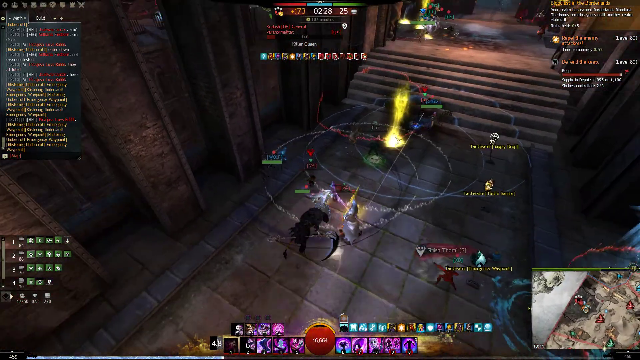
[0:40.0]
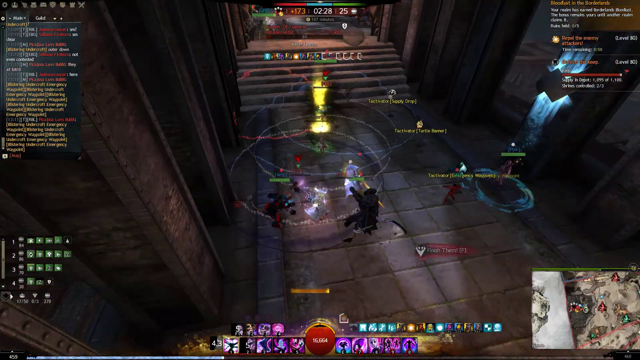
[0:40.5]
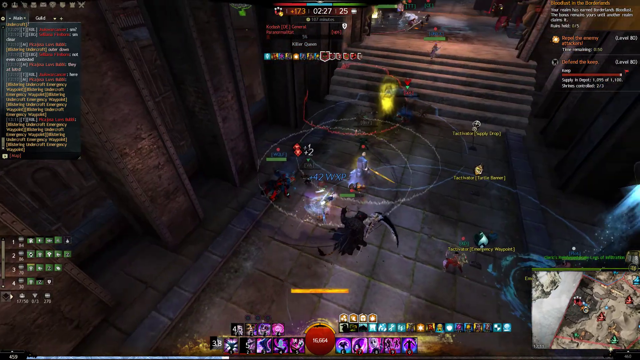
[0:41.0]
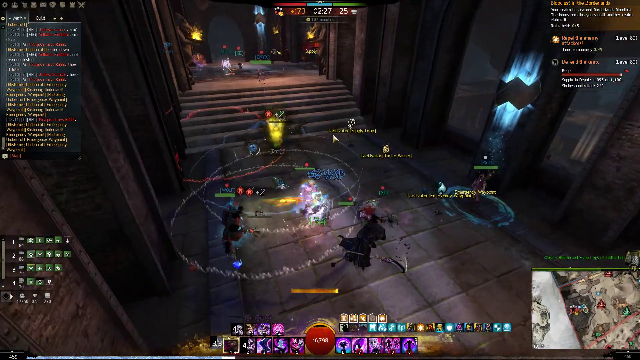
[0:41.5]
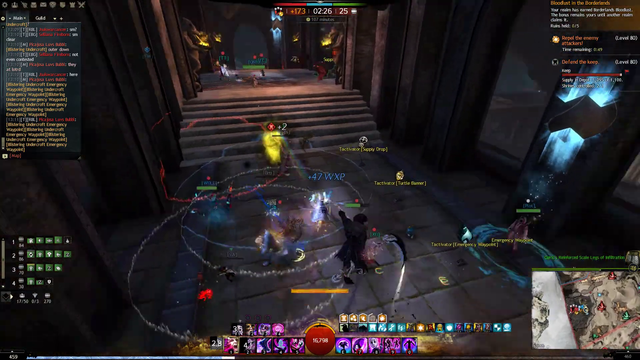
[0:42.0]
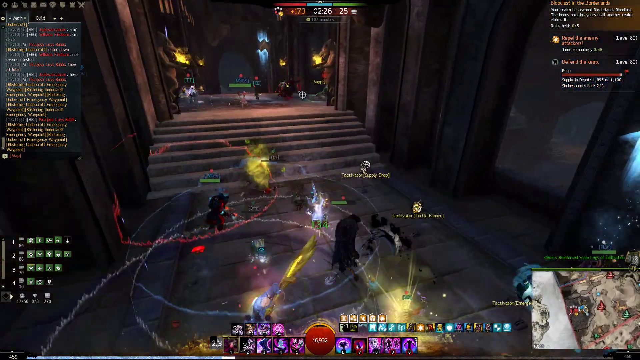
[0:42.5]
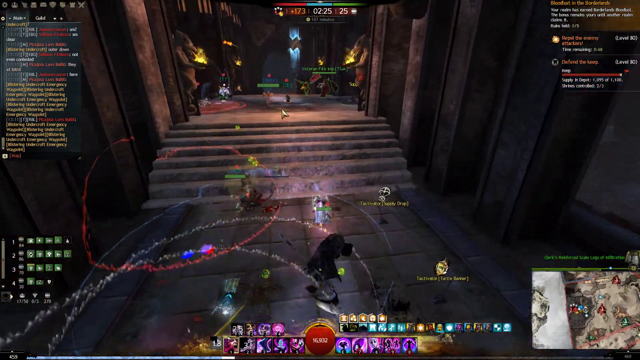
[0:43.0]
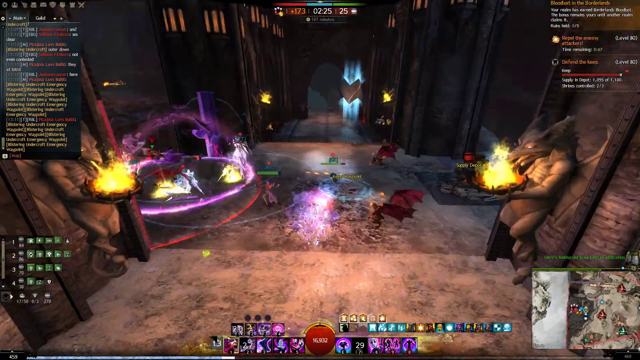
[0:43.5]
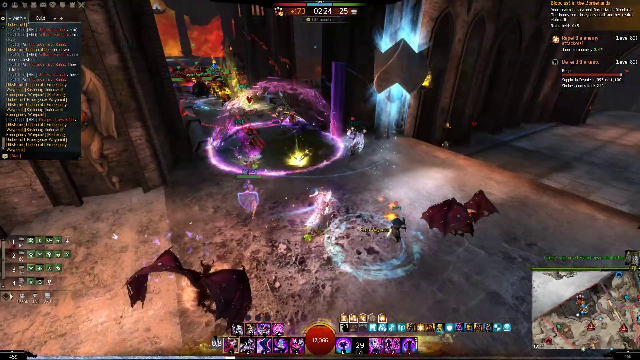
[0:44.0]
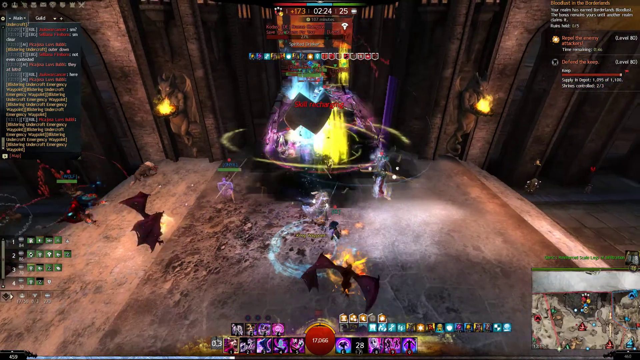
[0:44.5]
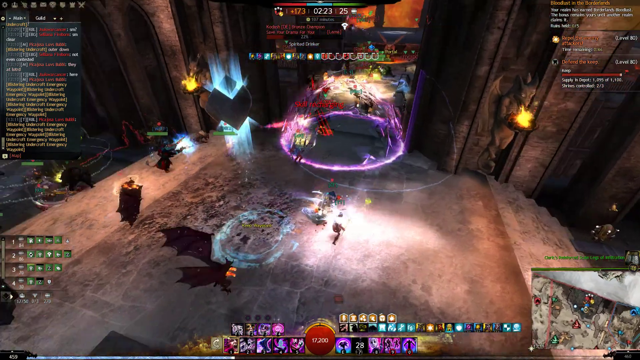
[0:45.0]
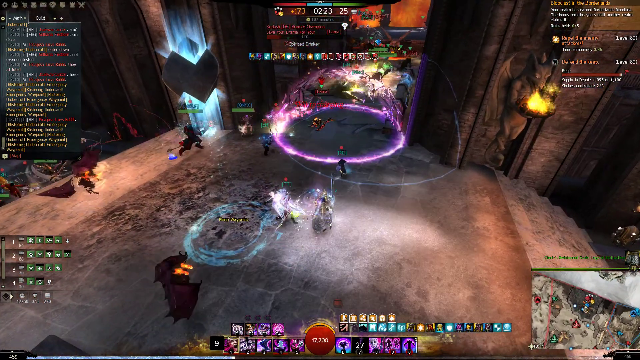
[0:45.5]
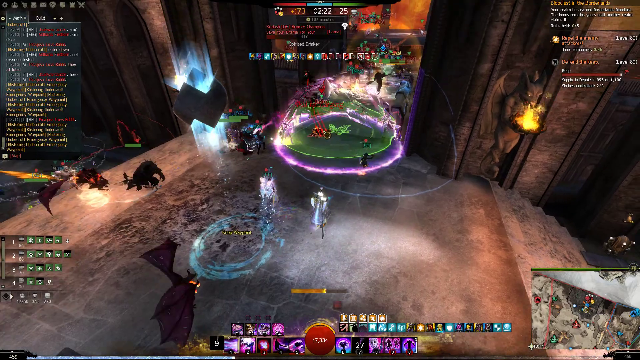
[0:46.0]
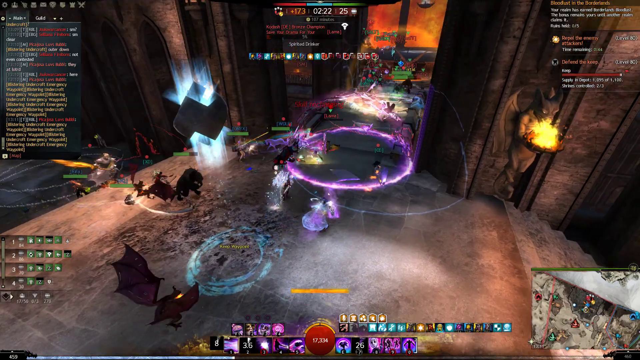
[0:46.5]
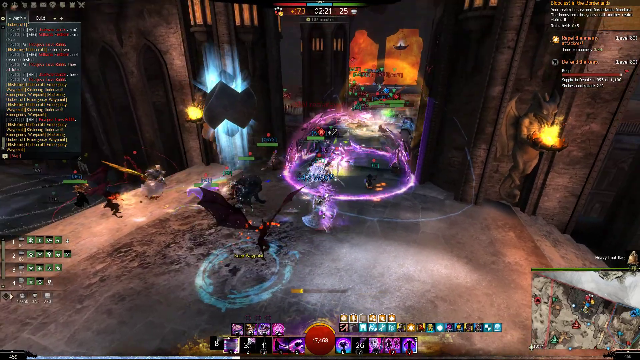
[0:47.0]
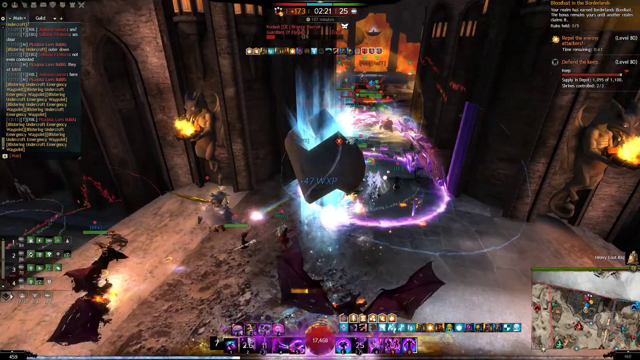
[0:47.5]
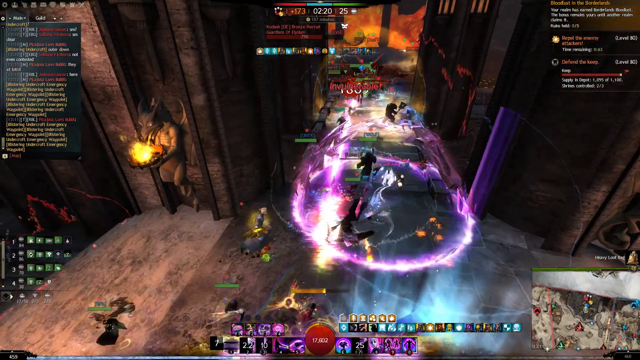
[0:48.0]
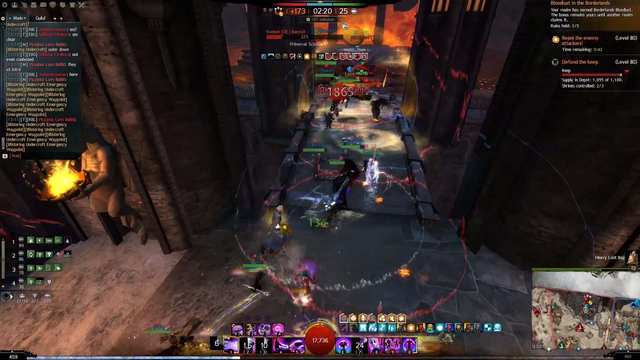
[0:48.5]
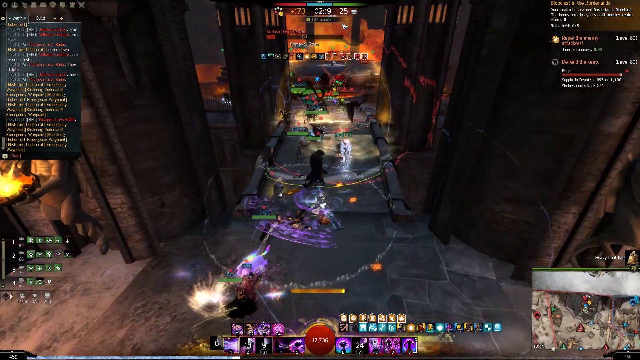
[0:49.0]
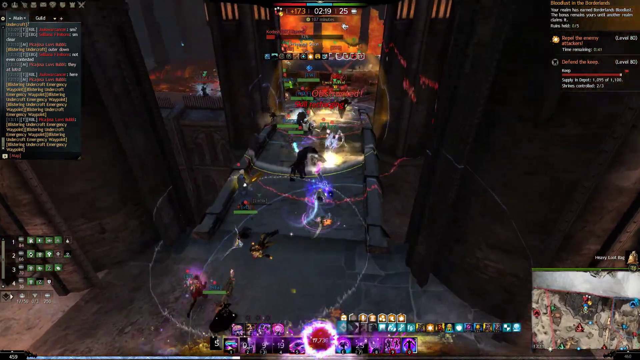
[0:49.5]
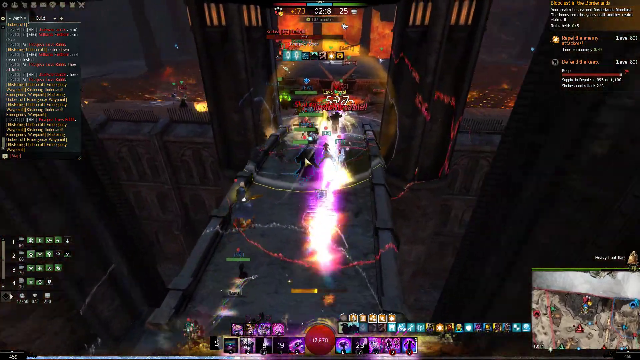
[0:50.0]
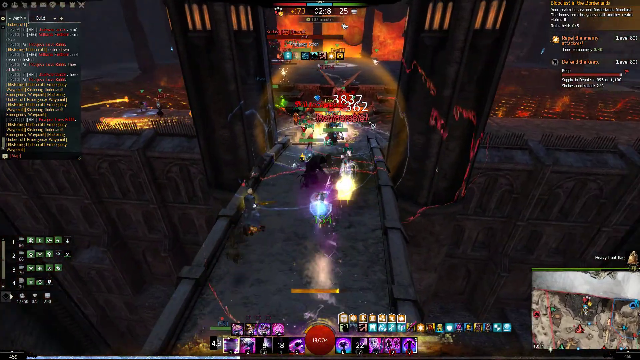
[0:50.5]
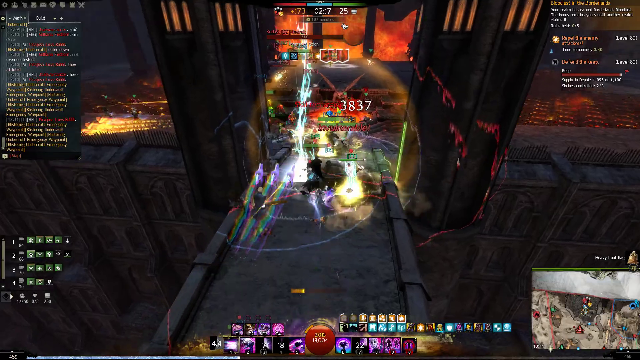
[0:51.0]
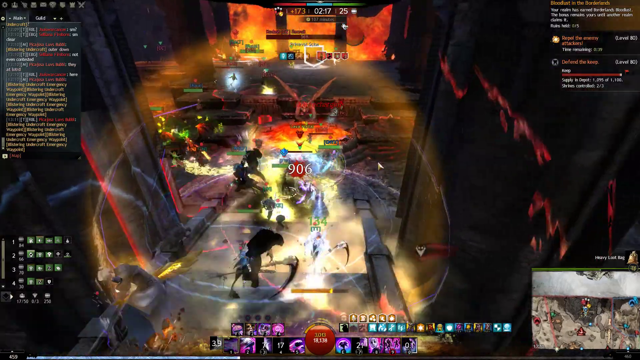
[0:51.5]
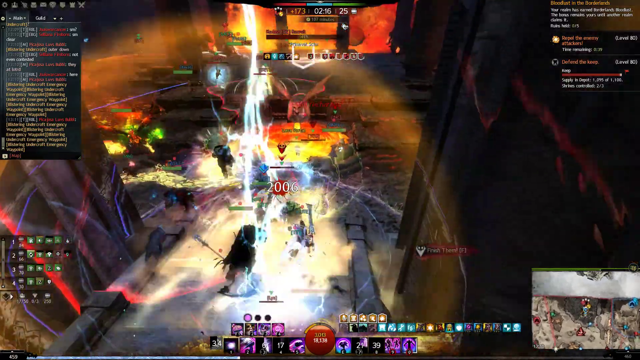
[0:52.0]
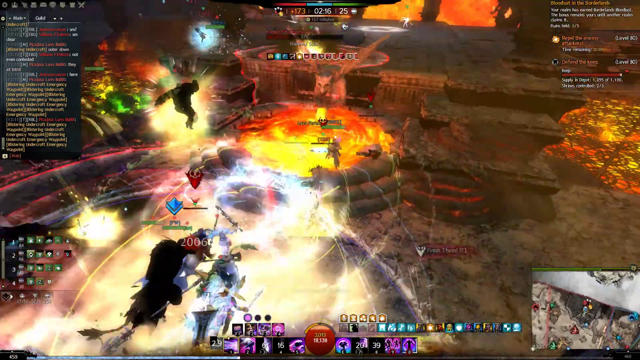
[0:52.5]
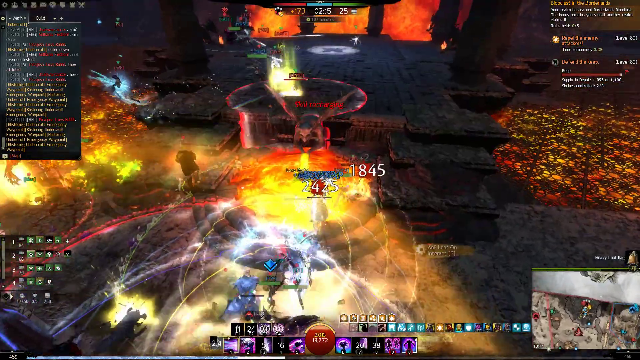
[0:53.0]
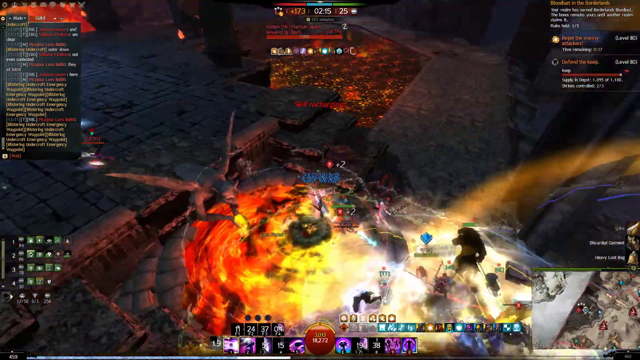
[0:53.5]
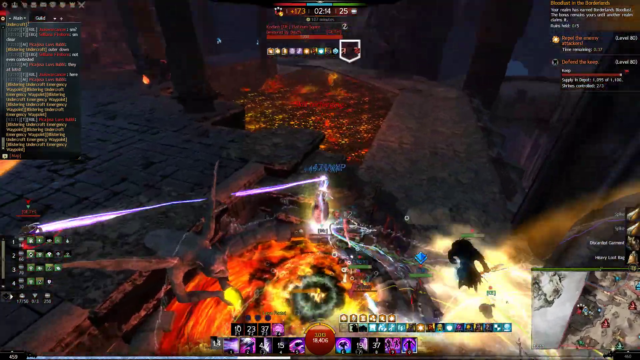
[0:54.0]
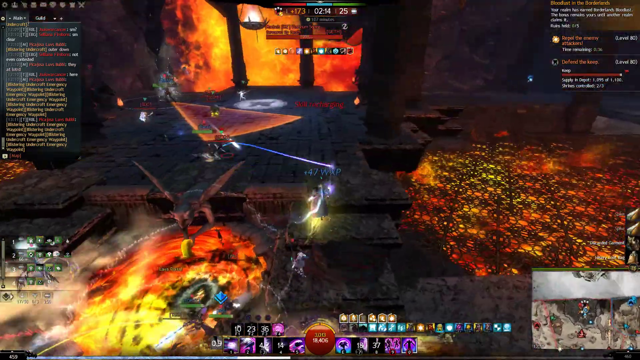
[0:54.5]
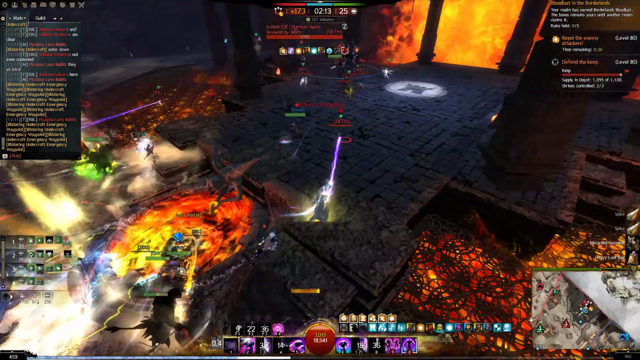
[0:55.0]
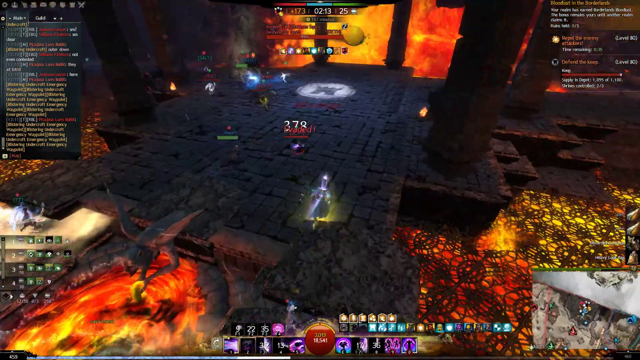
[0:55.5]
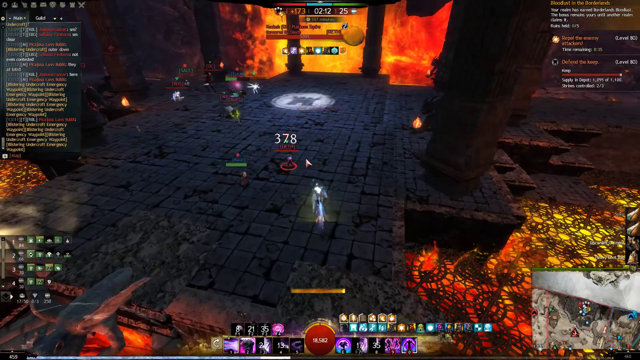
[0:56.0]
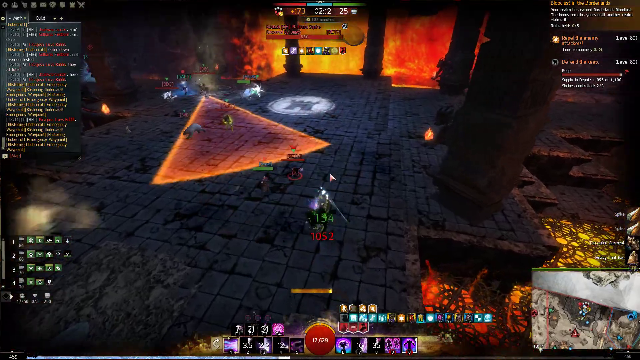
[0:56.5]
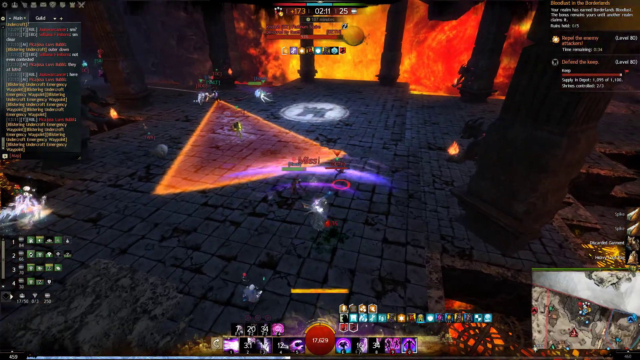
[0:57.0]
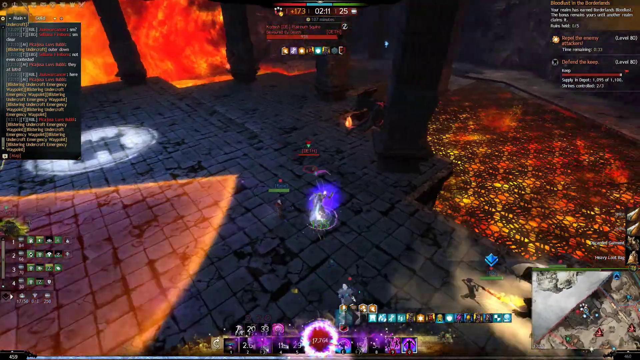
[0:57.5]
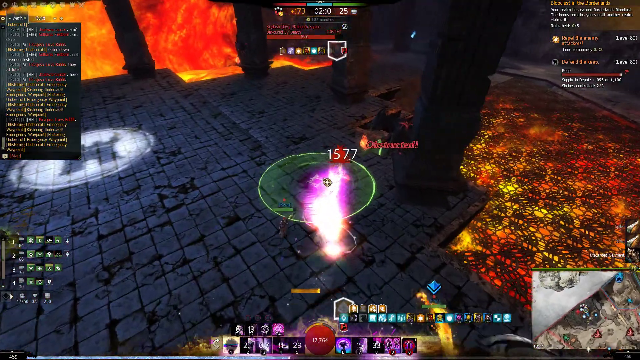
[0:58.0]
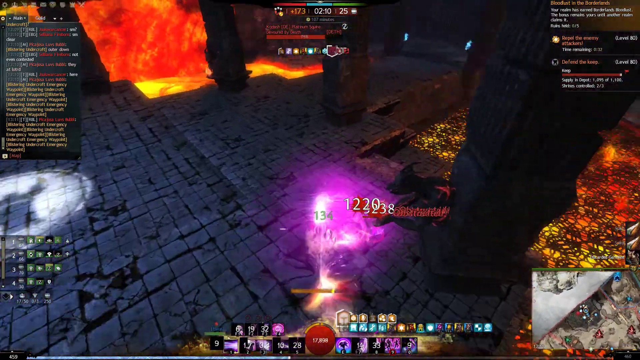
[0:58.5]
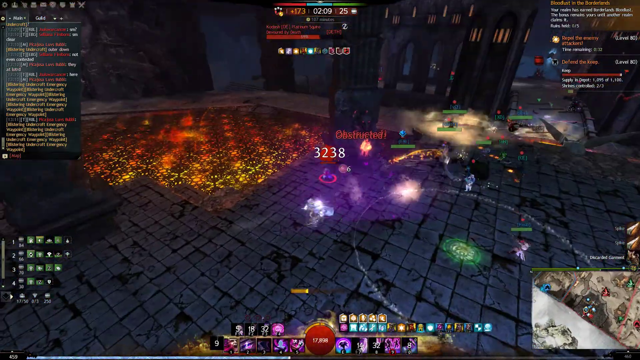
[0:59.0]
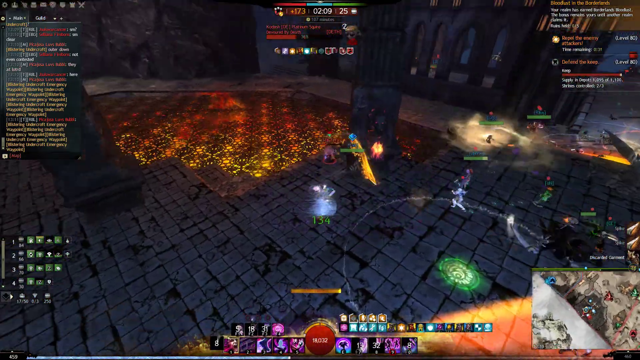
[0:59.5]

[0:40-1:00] Several characters run through a corridor area that looks like it could be inside a huge castle. The game appears to be multiplayer, with several different players playing at the same time. A chat window in the upper left corner shows people chatting during the gameplay, and a game map is in the lower right corner. The group seems to be running into enemies, but the enemies do not look powerful enough to stop the players from advancing further and further into the castle or dungeon area.